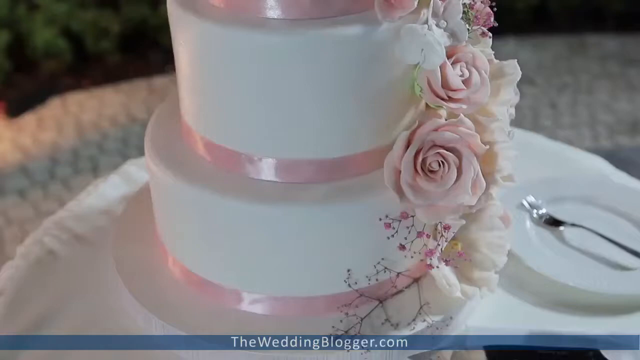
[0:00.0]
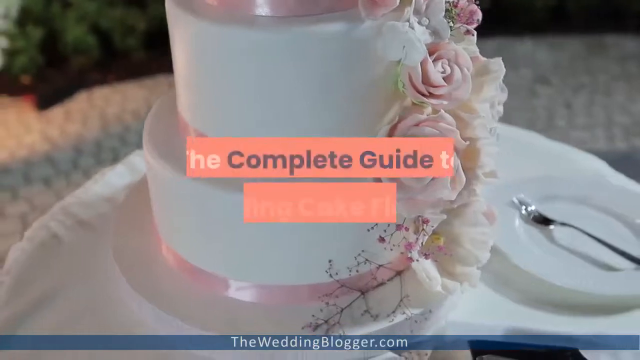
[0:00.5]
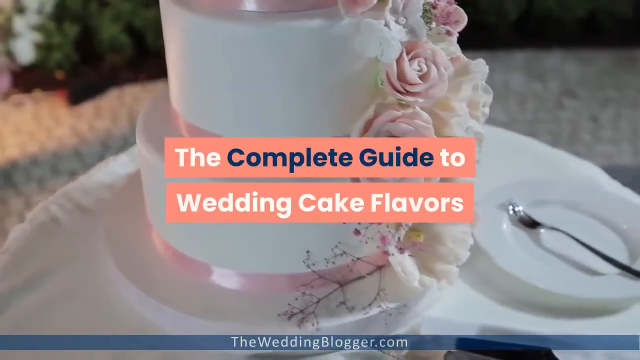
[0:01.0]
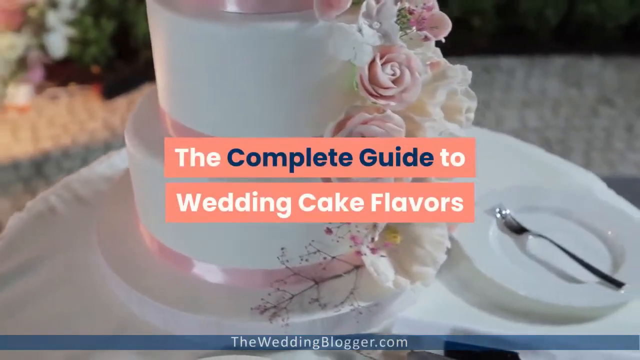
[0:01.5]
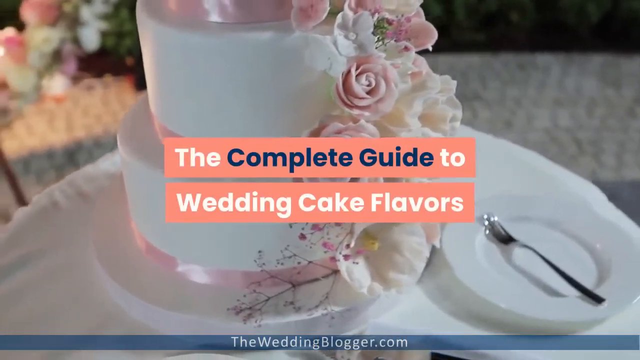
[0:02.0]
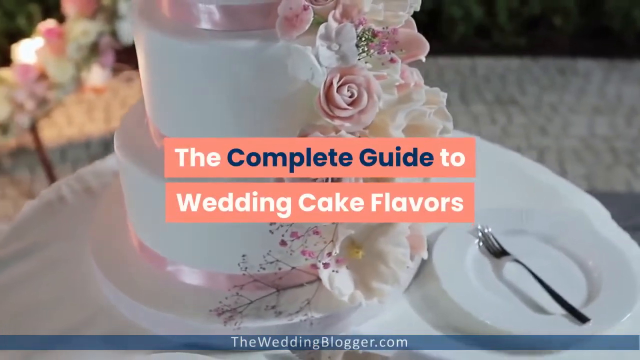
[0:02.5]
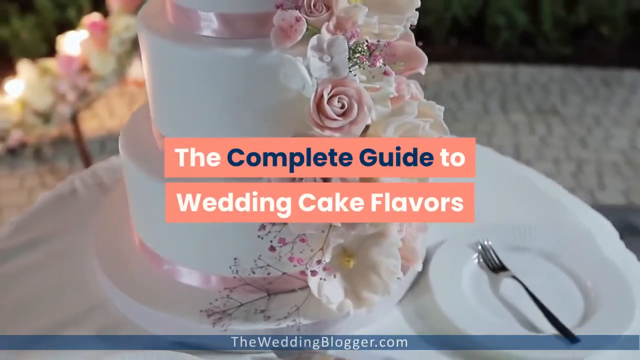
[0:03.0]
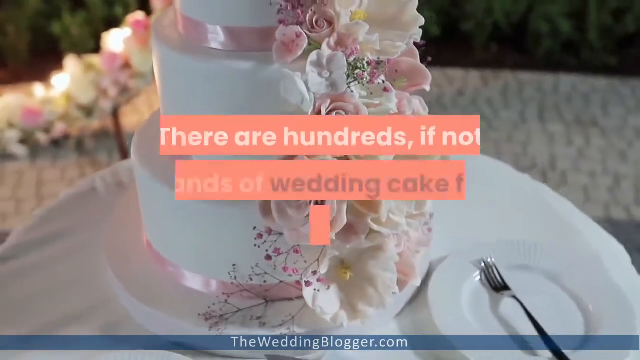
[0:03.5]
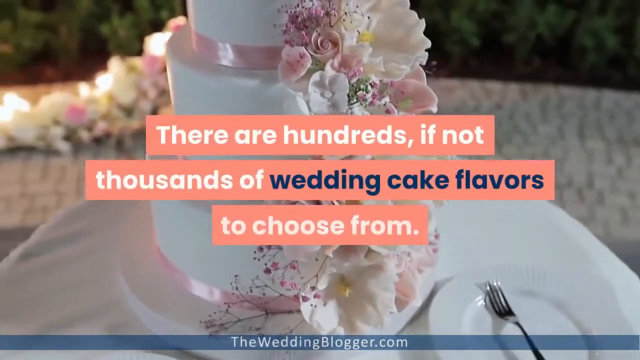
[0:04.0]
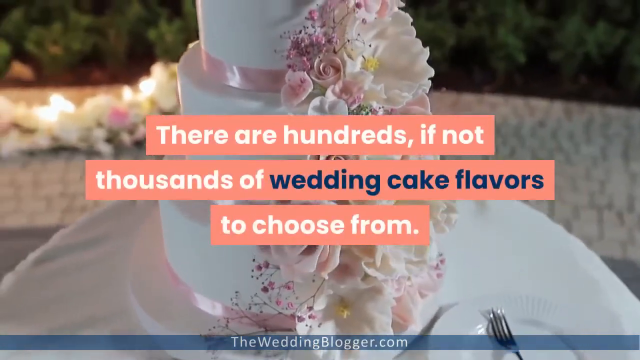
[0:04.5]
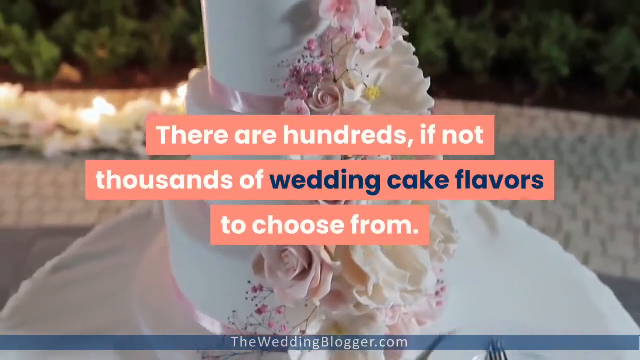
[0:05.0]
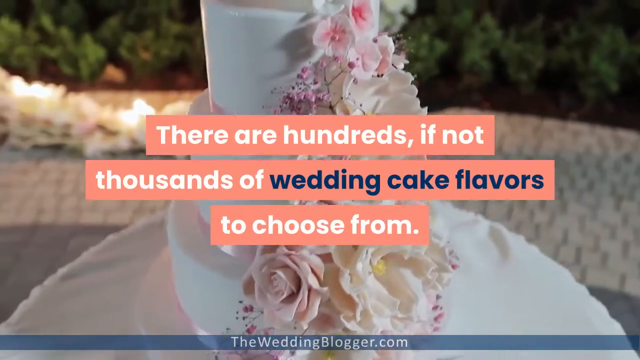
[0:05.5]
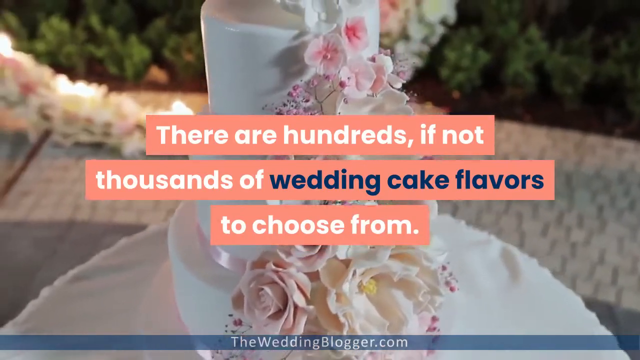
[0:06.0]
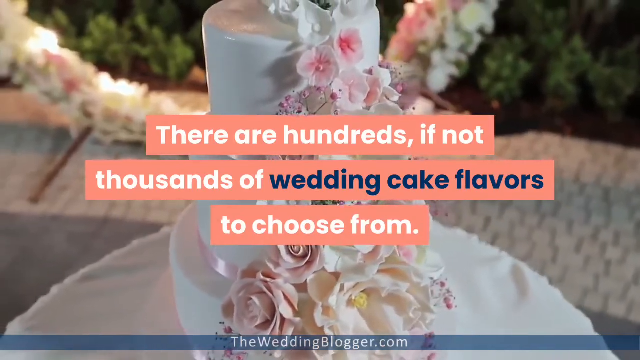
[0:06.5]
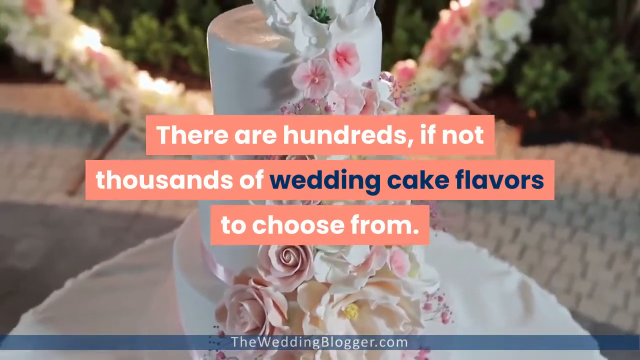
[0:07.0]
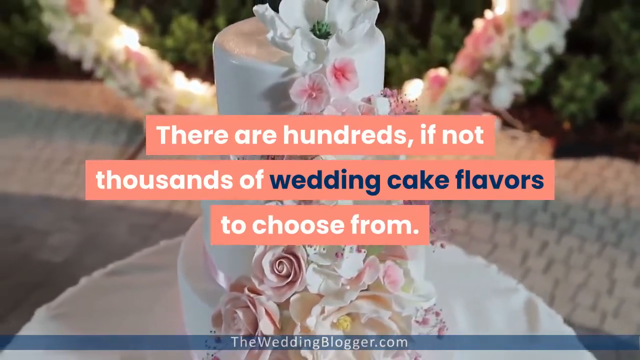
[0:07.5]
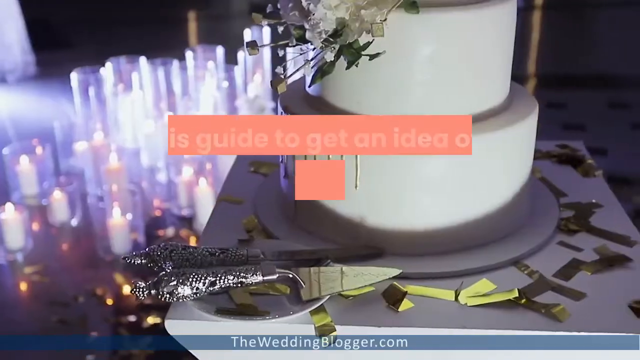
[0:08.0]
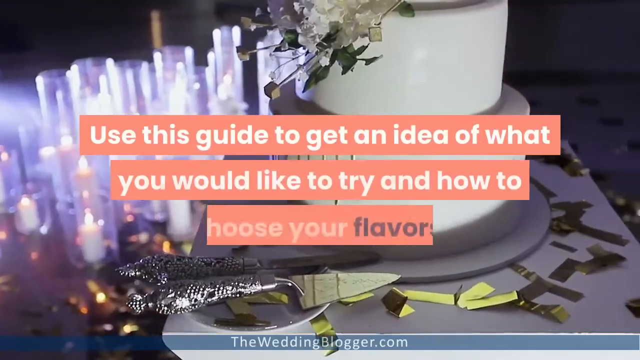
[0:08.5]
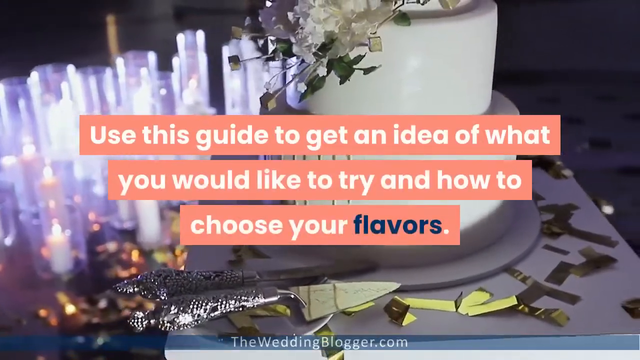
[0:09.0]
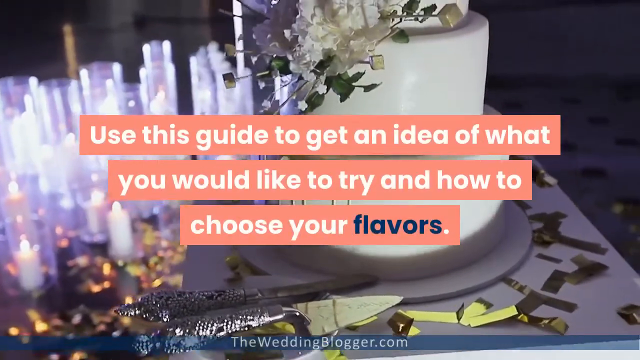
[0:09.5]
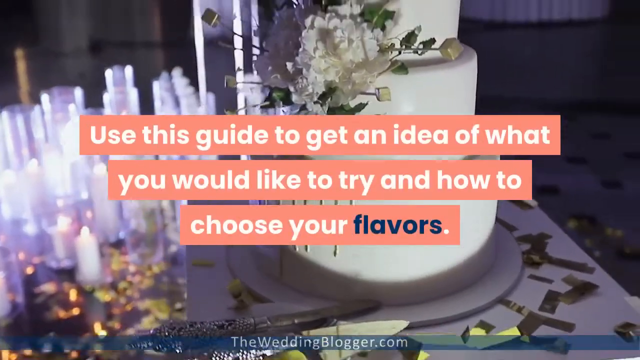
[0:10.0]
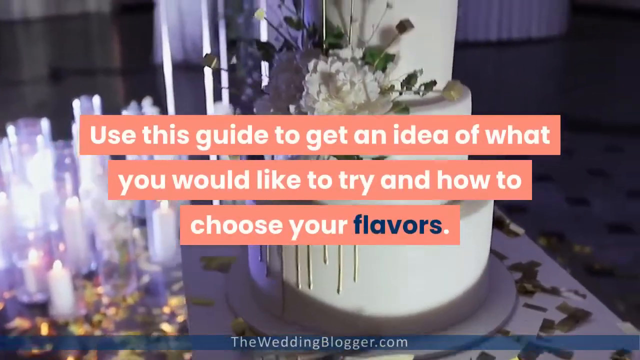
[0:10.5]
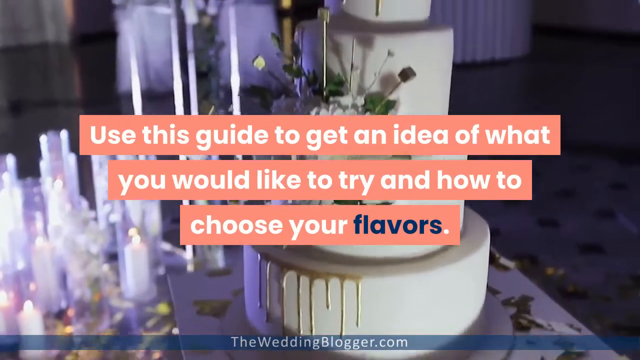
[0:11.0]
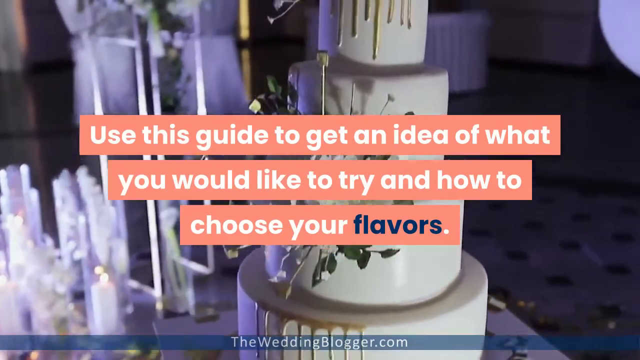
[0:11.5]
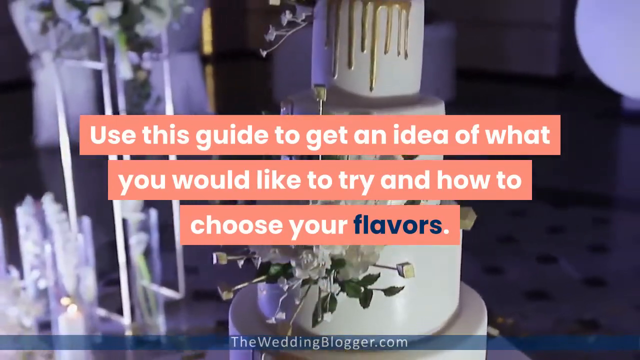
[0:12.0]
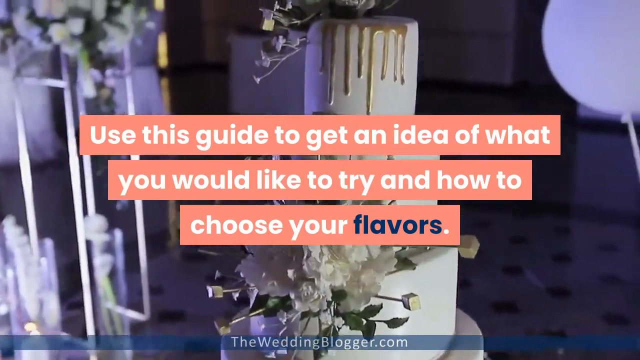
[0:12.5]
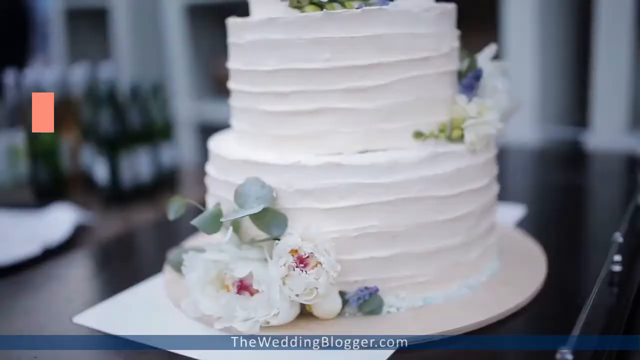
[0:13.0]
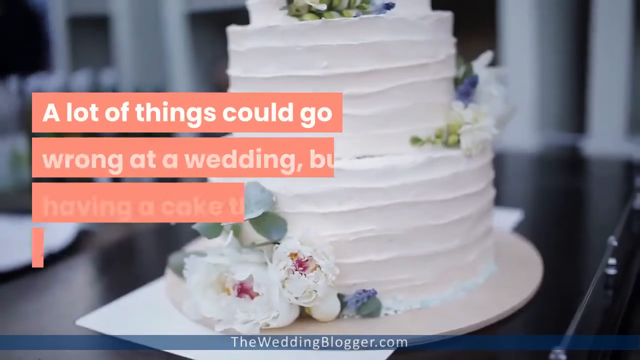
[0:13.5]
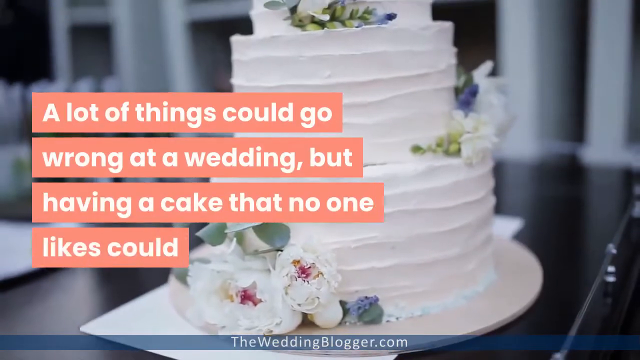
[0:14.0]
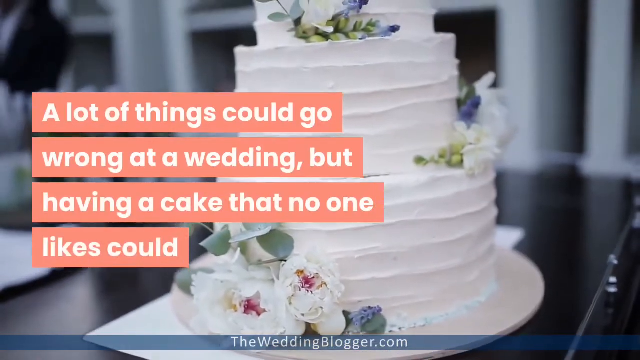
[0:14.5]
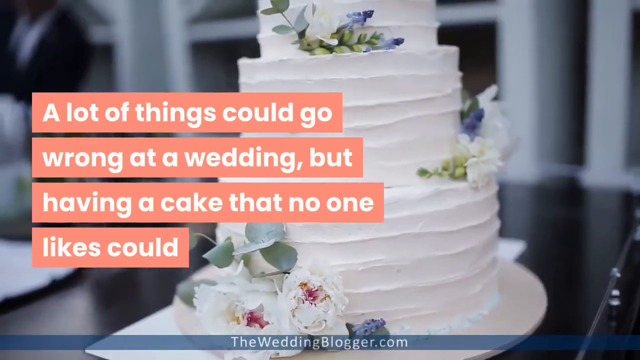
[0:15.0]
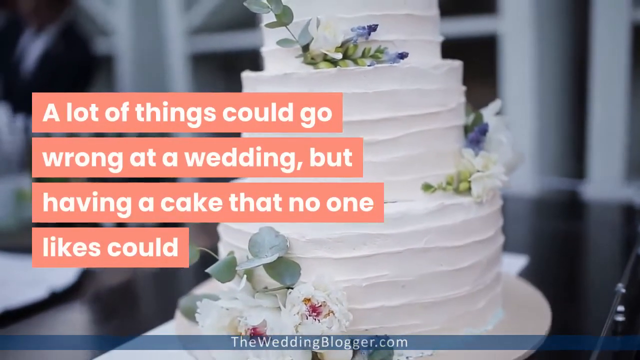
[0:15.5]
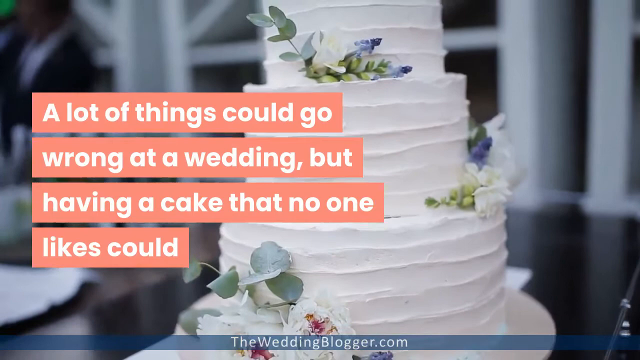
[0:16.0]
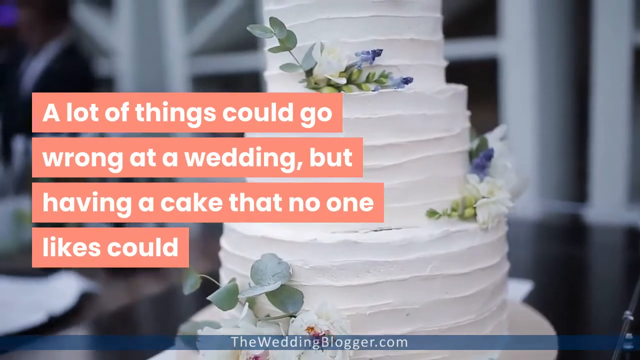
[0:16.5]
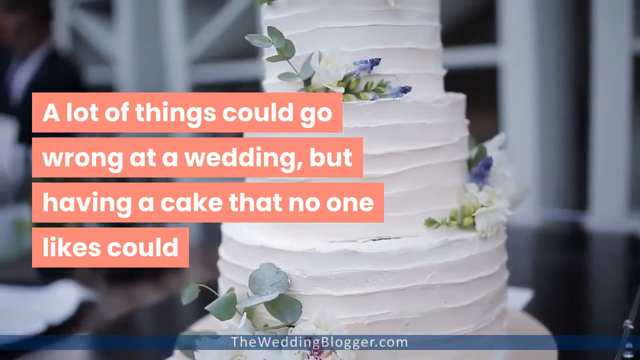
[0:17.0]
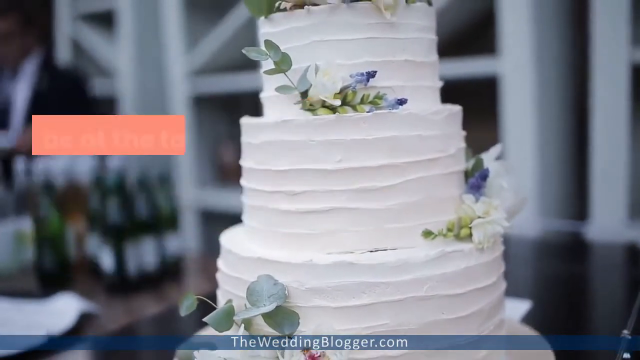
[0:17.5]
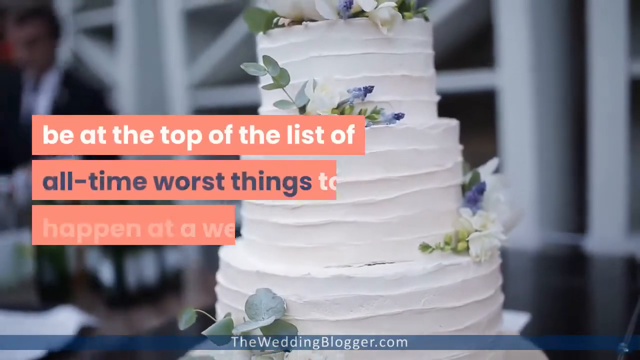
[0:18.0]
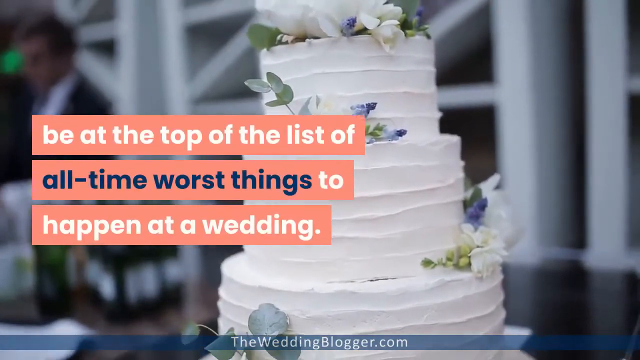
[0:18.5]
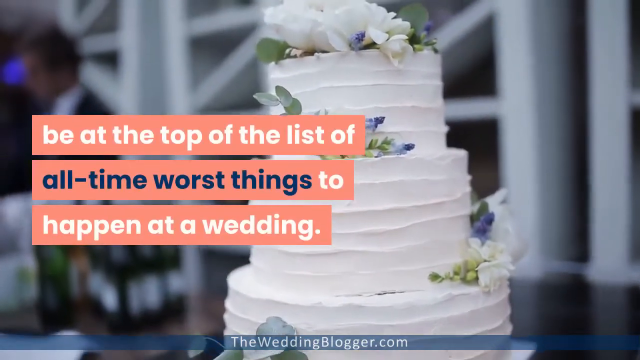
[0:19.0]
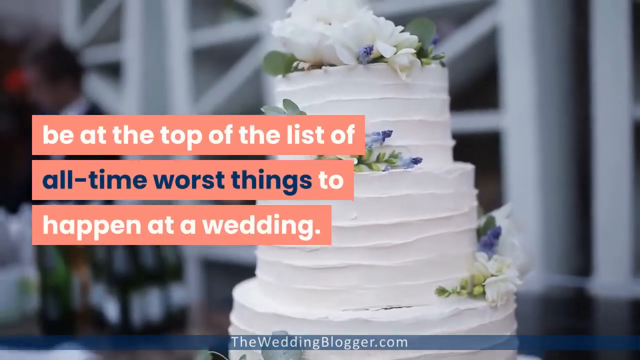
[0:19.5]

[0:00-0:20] The video opens on what appears to be a wedding cake with three tiers immediately visible, with pink ribbon and pink roses going up its side. On-screen text reads "The complete guide to wedding cake flavors." The camera goes around the cake and then shows it from higher up, as text reads "There are hundreds if not thousands of wedding cake flavors to choose from." Another, simpler cake with layers appears, with the text "Use this guide to get an idea of what you would like to try and how to choose your flavors." The view goes up this cake to show four layers; it is a more modern cake with gold dripping from it. Another cake follows, this one with kind of ridges on it, and the text reads "A lot of things could go wrong at a wedding, but having a cake that no one likes could be at the top of the list of all time worst things to happen at a wedding."